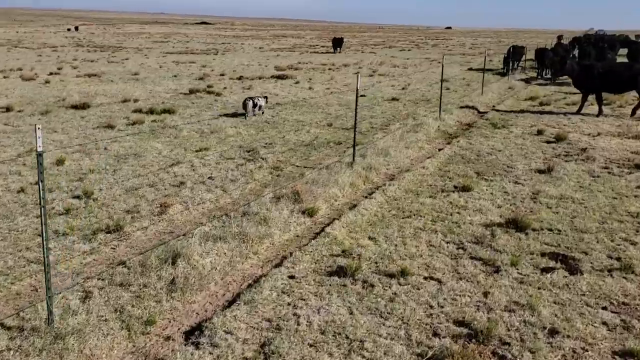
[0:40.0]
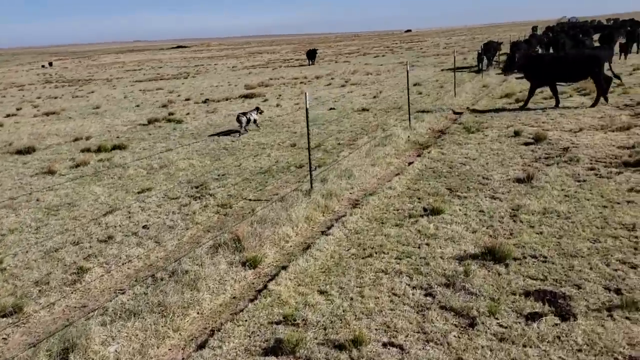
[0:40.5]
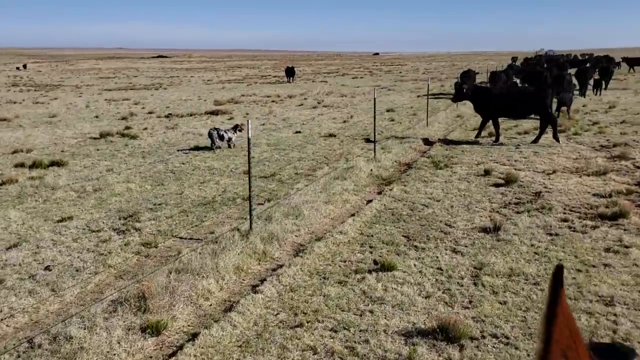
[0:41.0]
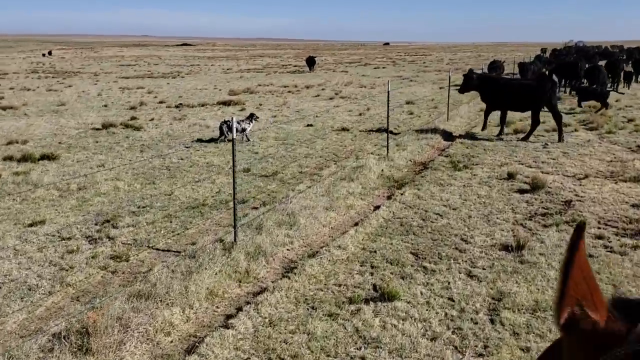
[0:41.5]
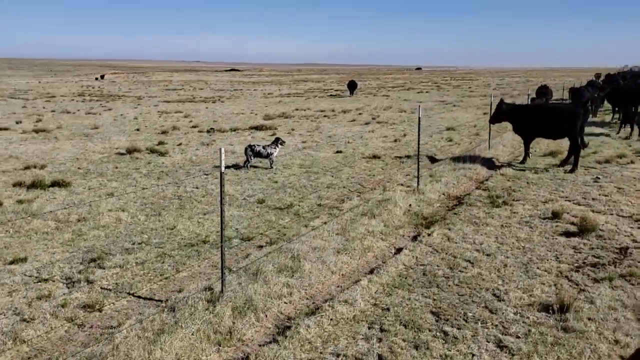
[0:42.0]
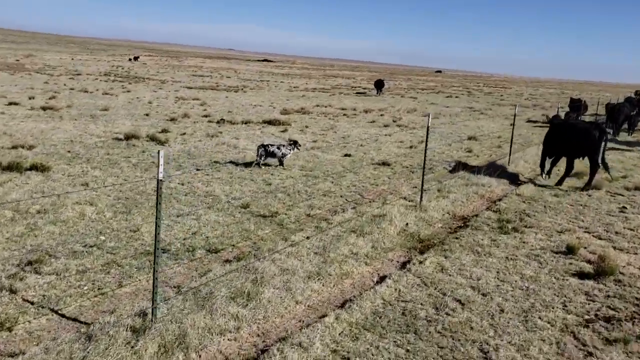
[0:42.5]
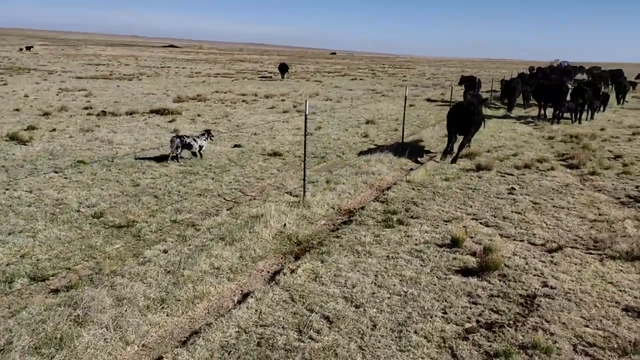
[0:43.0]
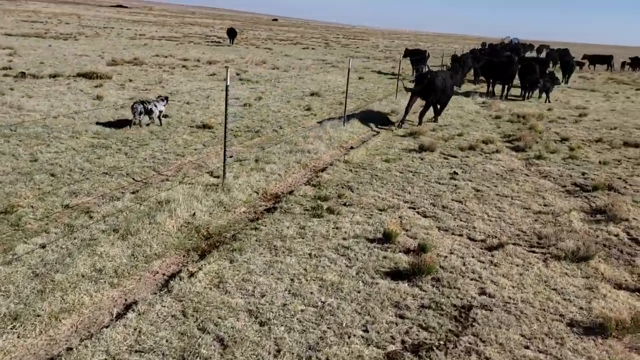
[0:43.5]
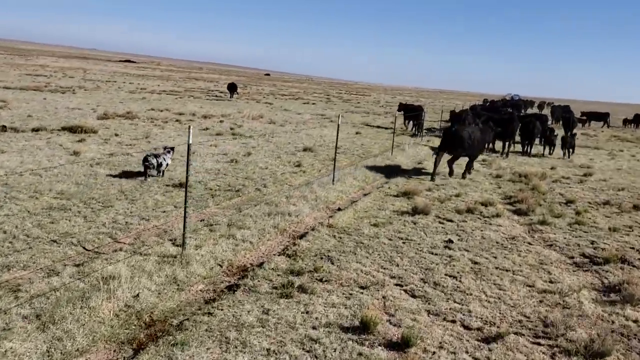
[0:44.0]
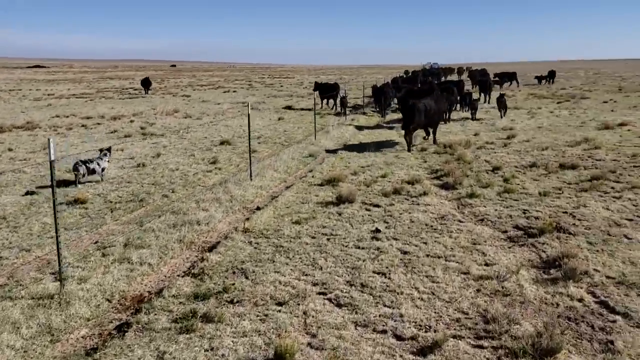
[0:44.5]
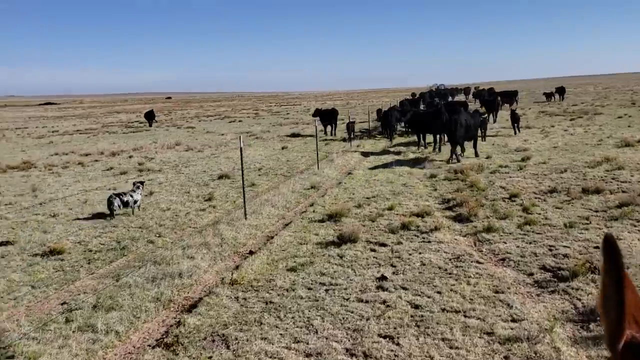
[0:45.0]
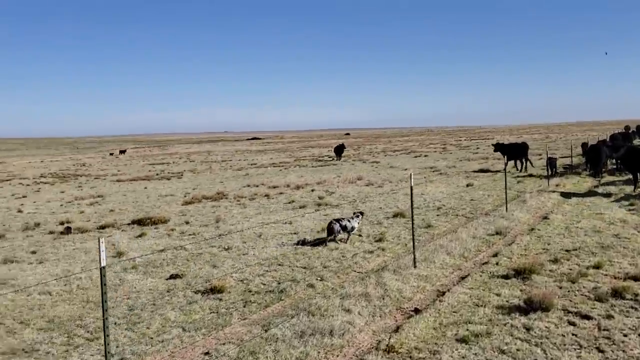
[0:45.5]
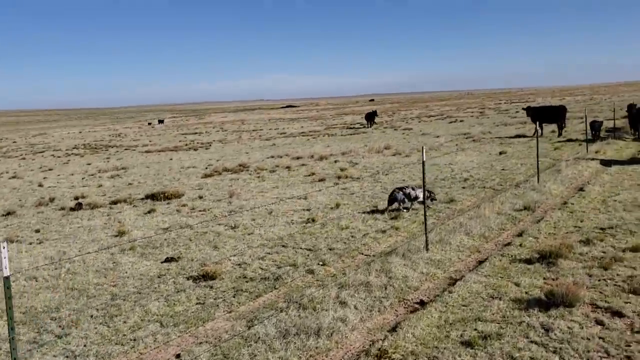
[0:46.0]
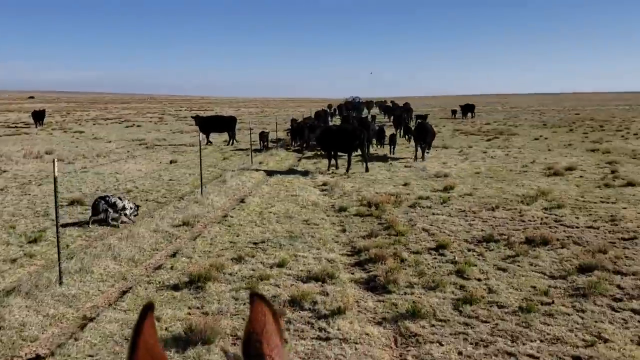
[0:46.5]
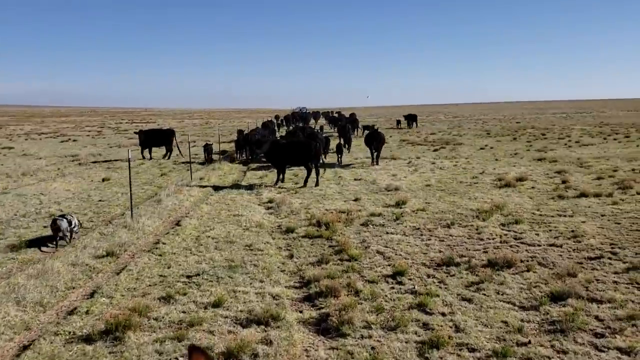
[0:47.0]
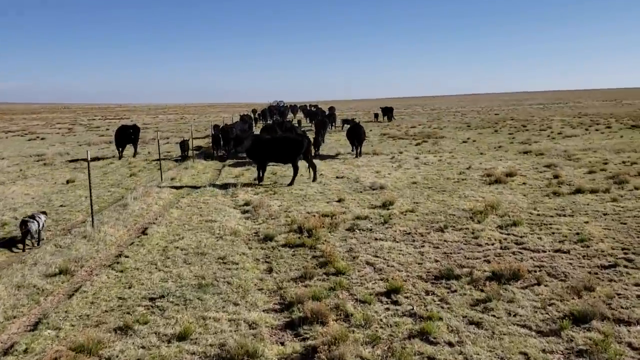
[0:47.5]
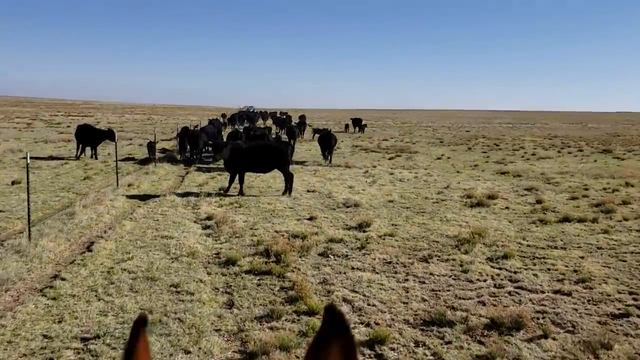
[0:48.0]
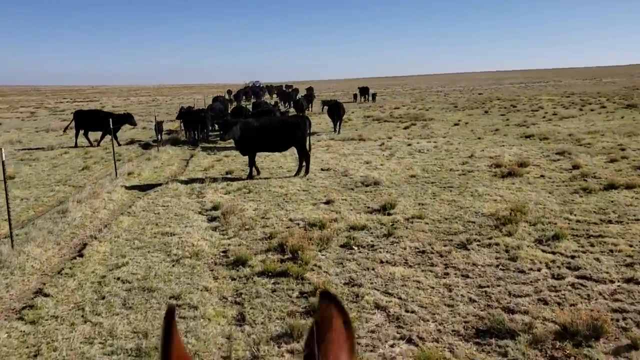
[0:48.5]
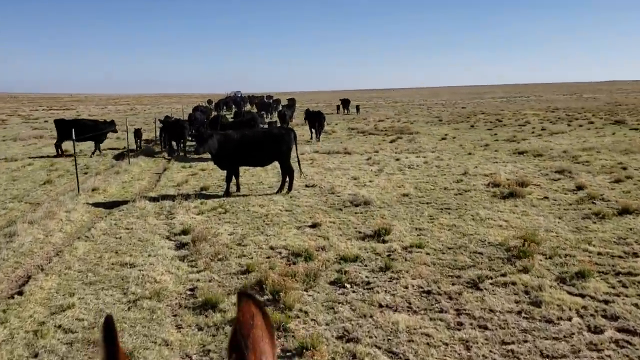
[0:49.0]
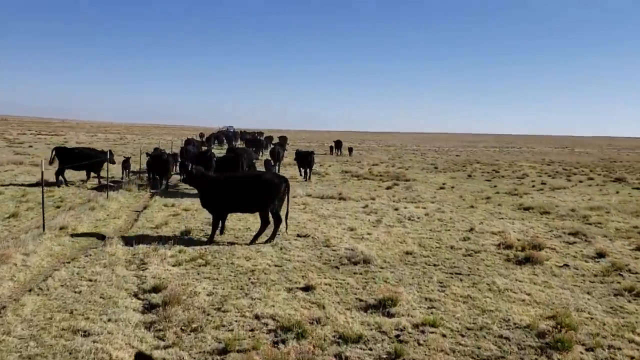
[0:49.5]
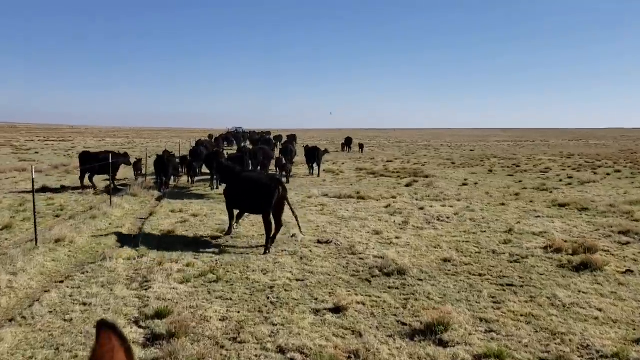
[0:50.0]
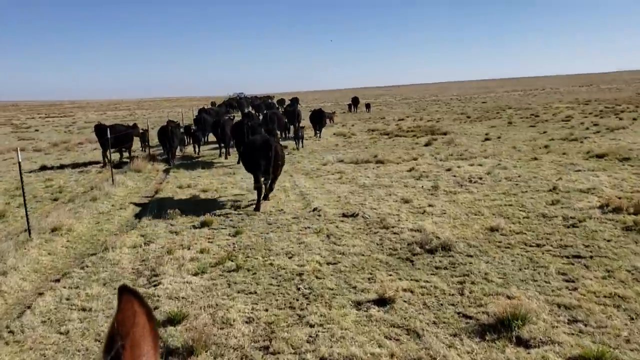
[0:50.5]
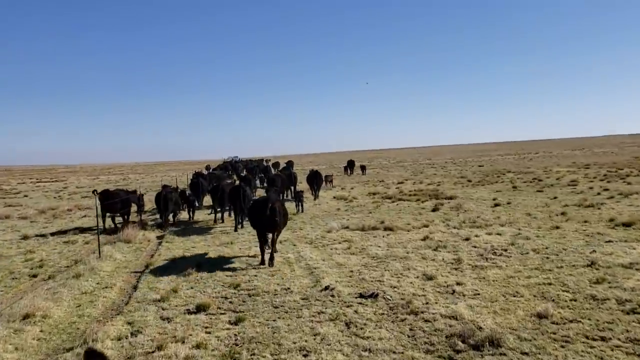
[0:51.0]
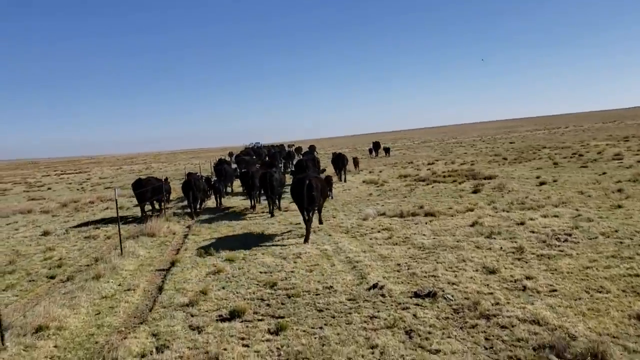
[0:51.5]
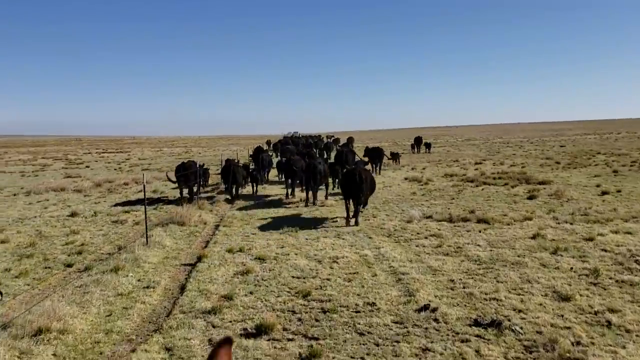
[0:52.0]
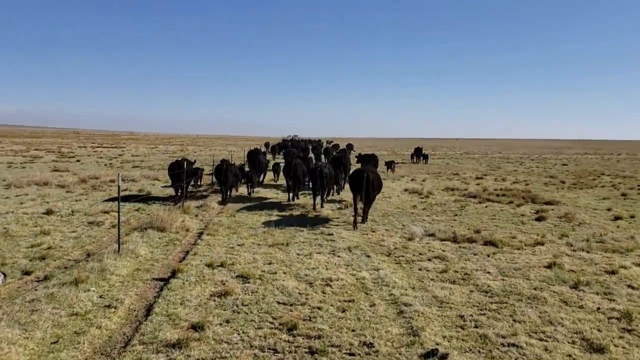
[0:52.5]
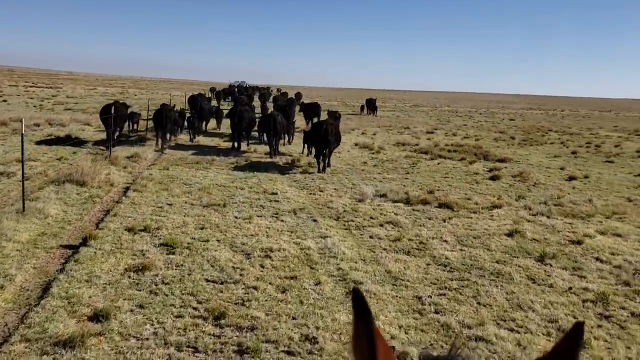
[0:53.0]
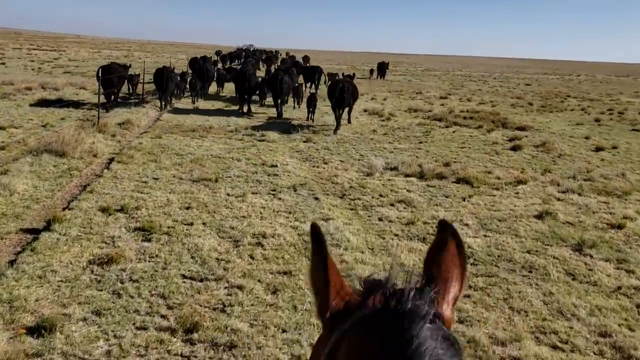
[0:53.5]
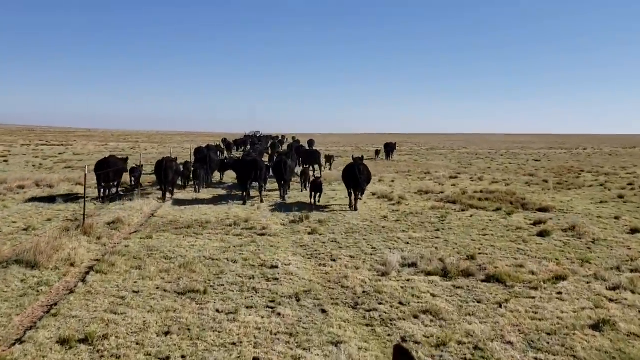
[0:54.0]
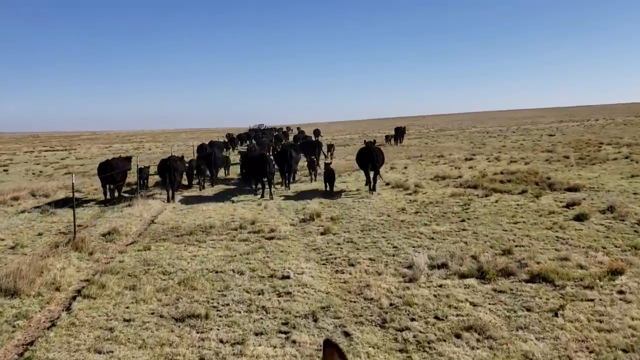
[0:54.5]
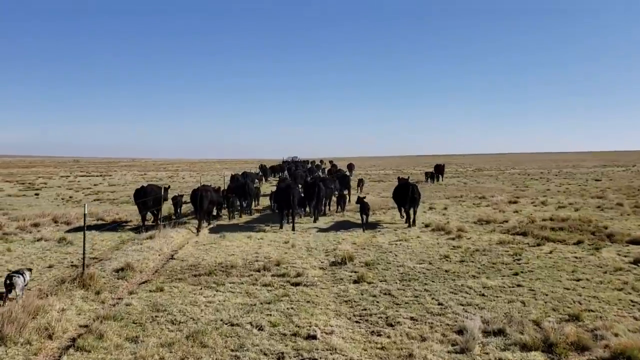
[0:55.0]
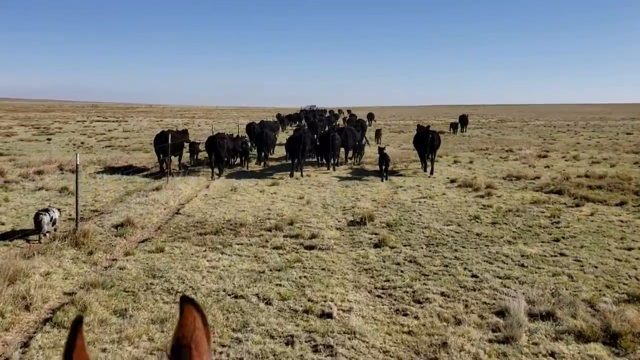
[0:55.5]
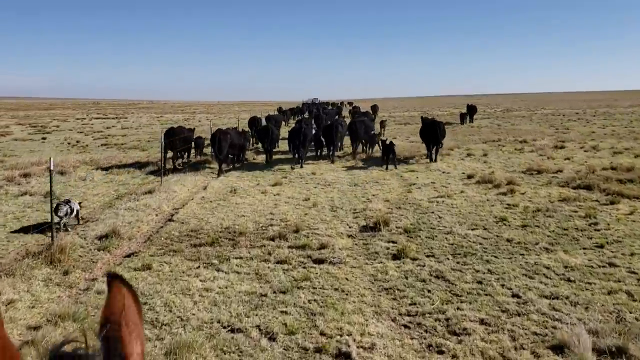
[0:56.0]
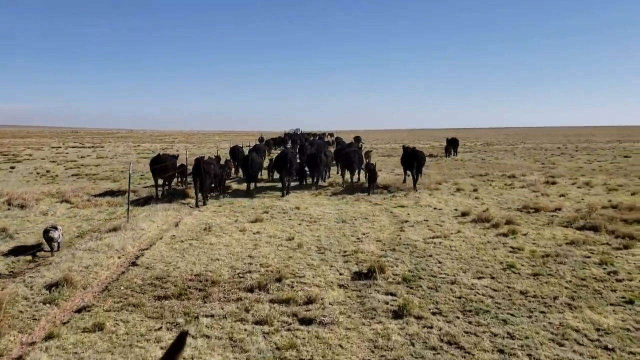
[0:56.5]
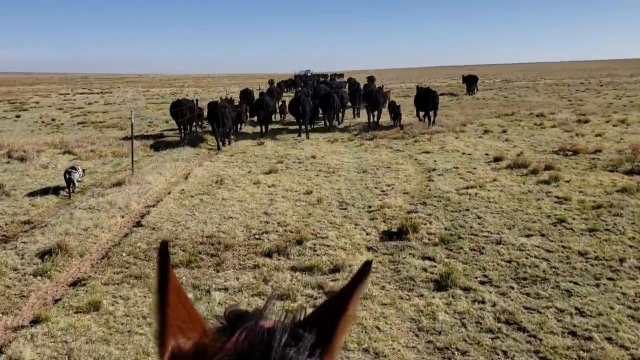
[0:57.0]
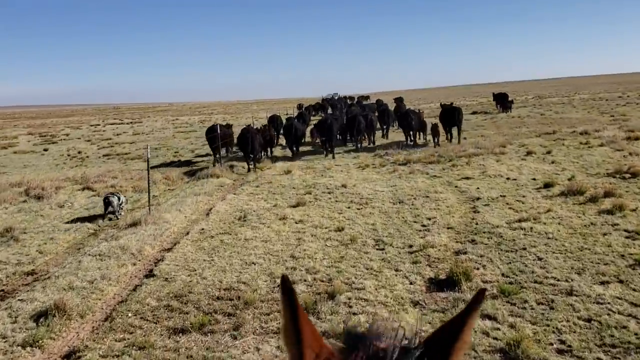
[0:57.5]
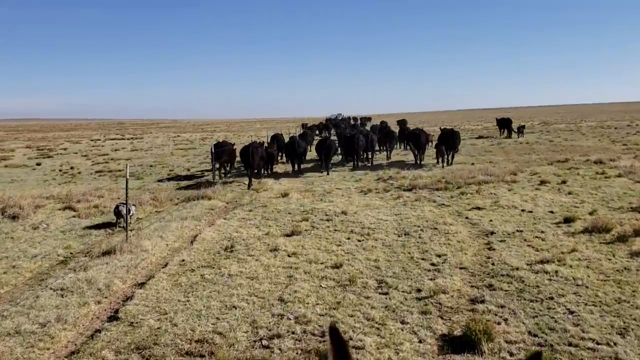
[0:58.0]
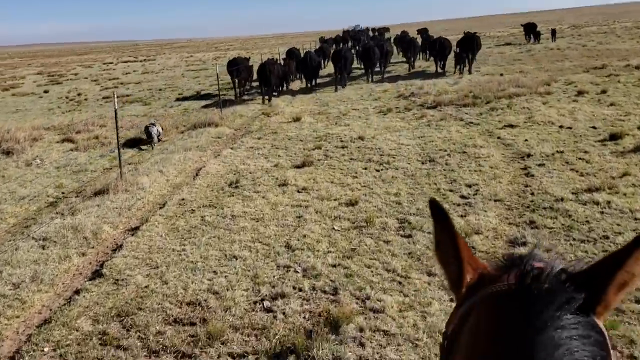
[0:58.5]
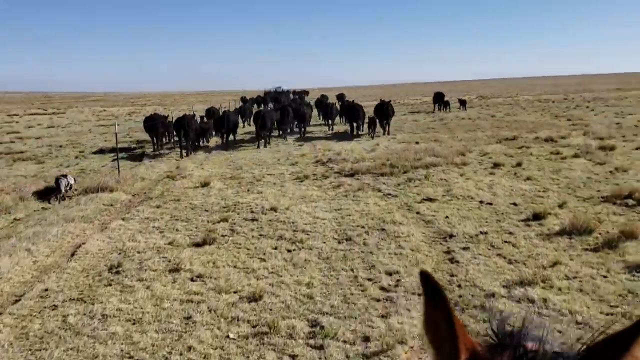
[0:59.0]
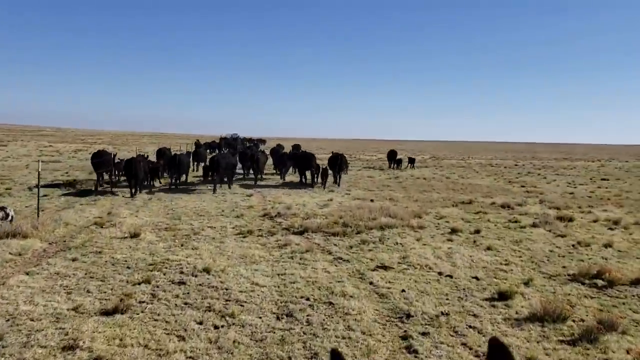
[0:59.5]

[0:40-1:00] One of the cattle faces the dog on the left side, and the dog briefly faces it before they part ways. The cow gets scared and runs away while the dog follows, but the dog does not cross the barrier: a fence on the left side separates the cattle and keeps them in one section. The dog tries to cross it but does not. Two other cattle are beyond the fence, right up against it, trying to get back to the group; they have not crossed yet and run along with the group right next to the fence, with the dog right behind them. The cattle all run in unison.